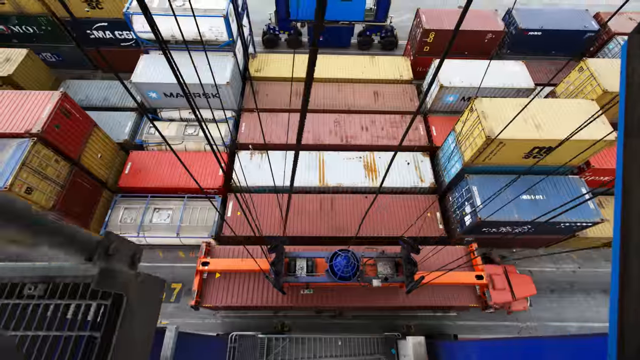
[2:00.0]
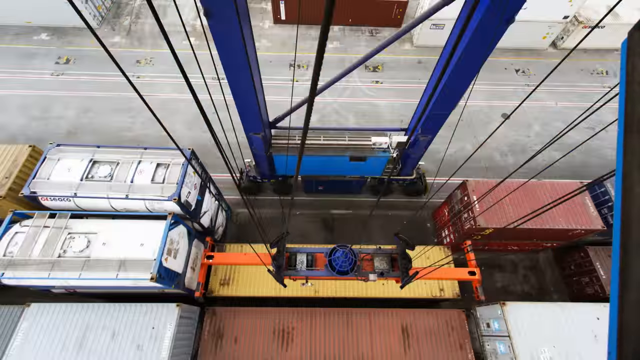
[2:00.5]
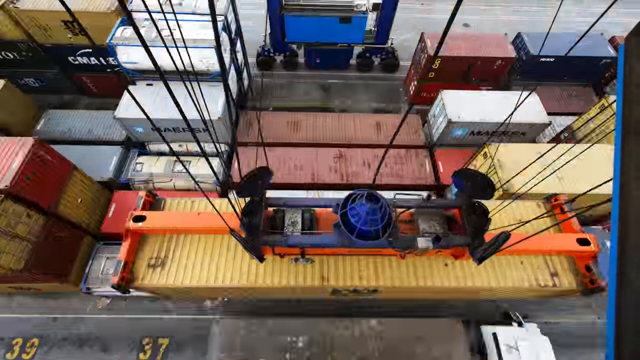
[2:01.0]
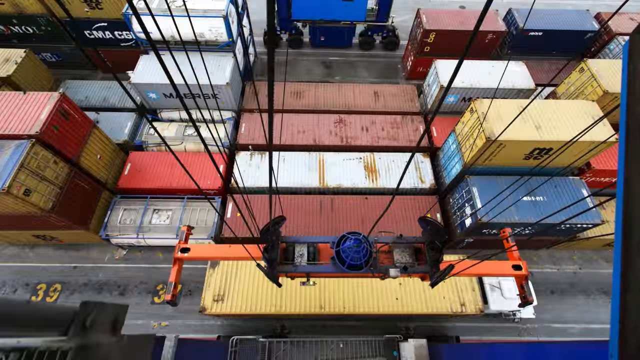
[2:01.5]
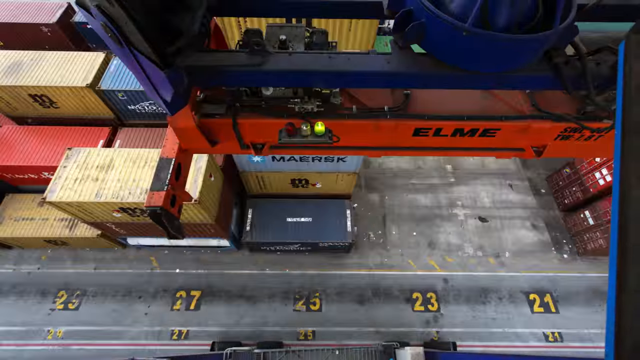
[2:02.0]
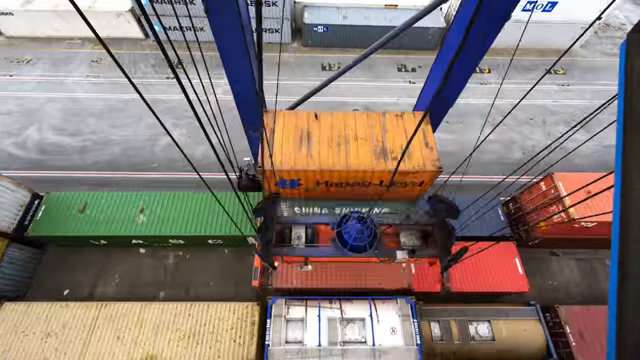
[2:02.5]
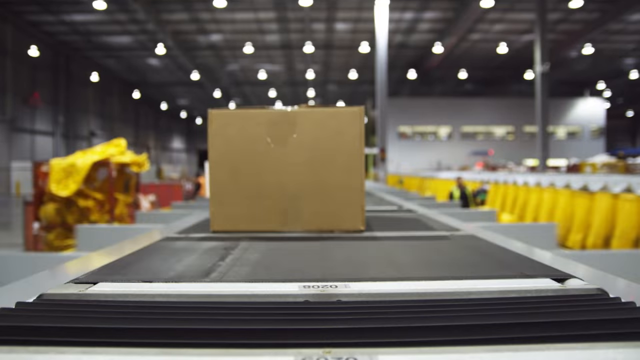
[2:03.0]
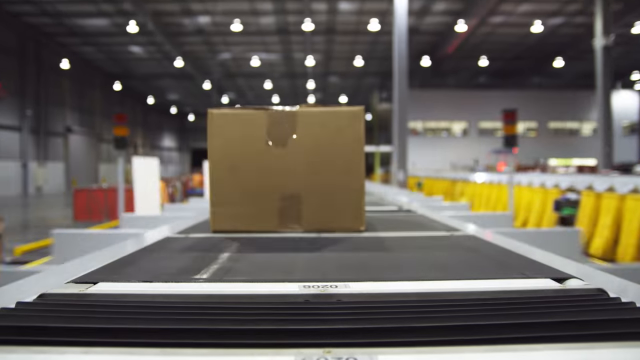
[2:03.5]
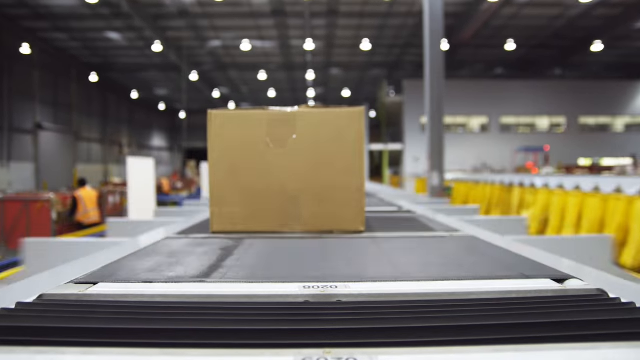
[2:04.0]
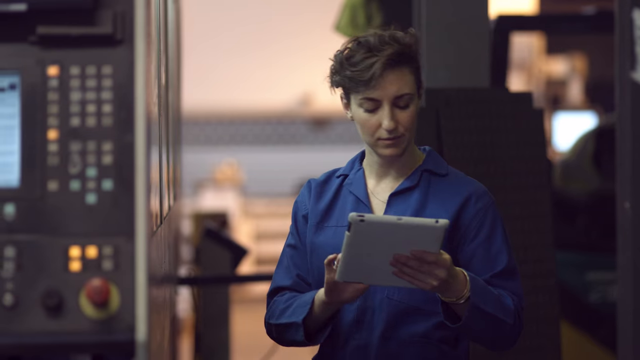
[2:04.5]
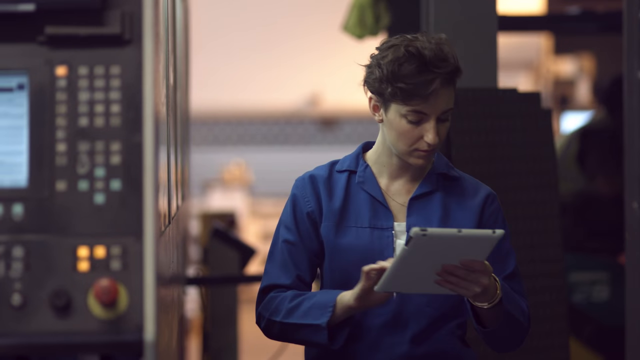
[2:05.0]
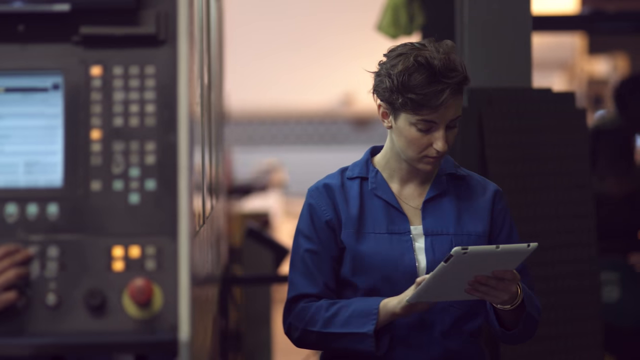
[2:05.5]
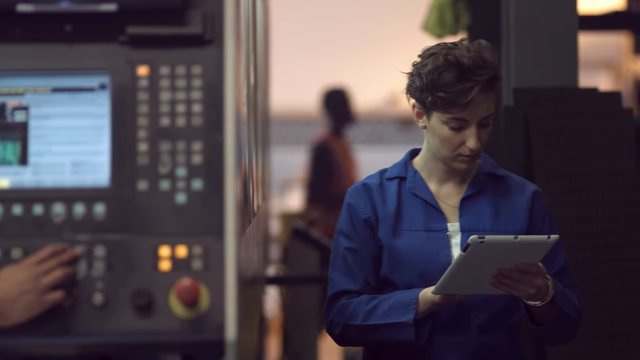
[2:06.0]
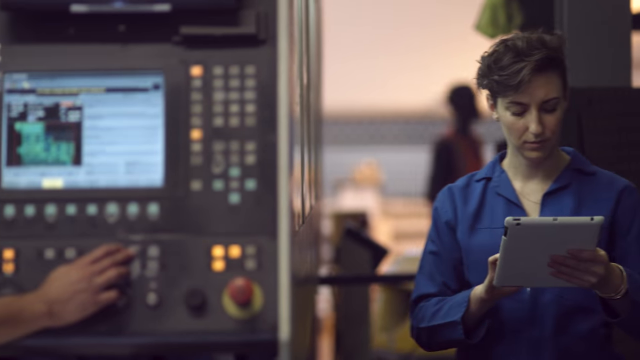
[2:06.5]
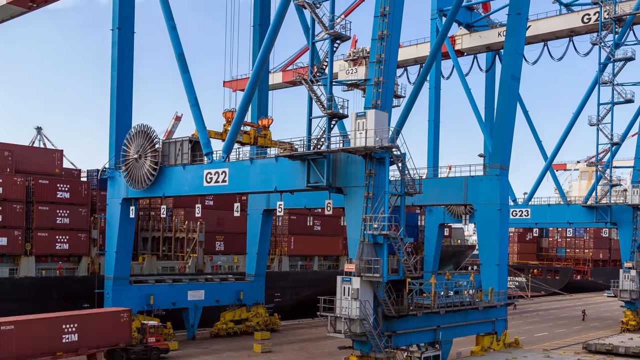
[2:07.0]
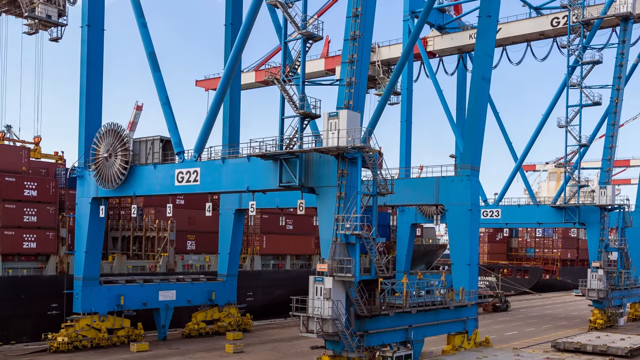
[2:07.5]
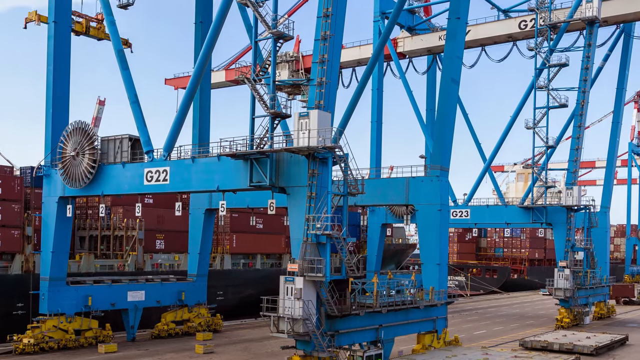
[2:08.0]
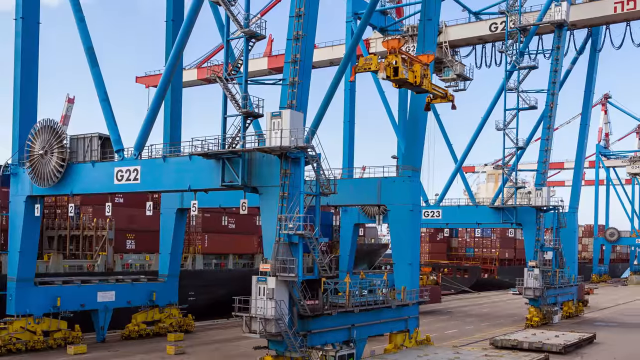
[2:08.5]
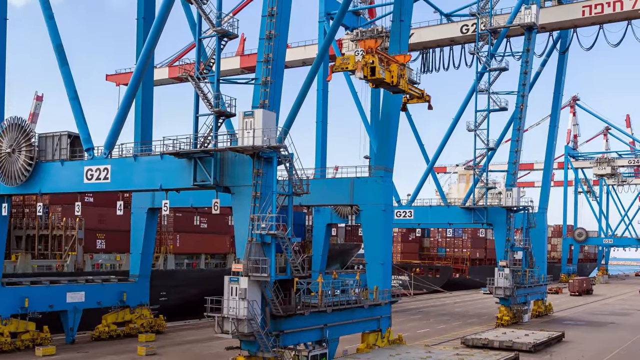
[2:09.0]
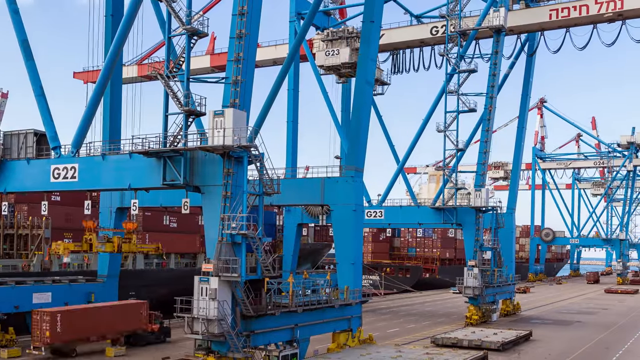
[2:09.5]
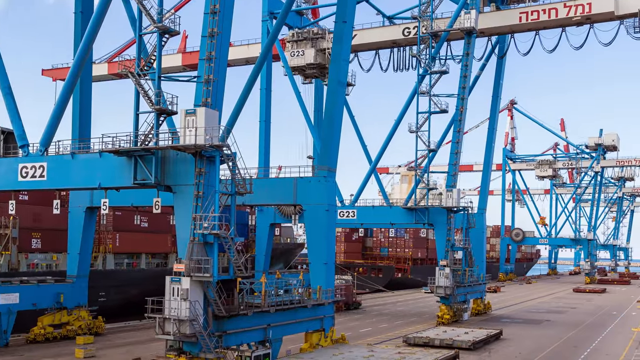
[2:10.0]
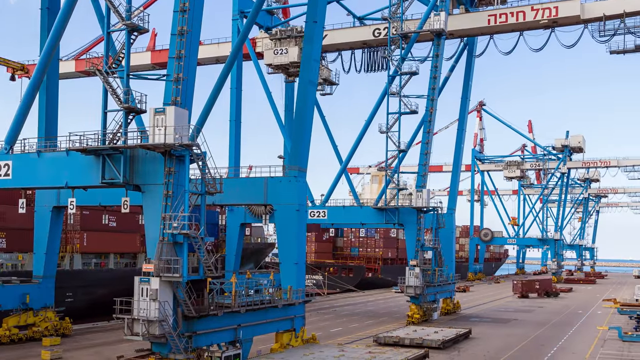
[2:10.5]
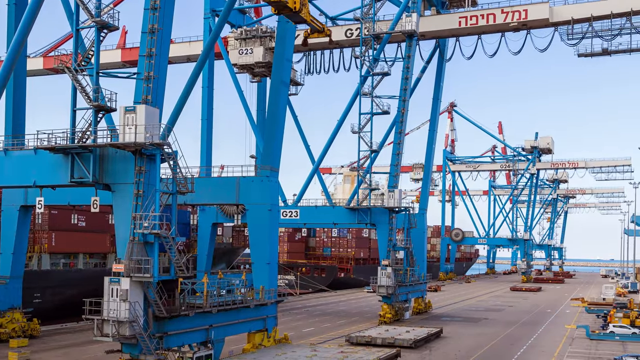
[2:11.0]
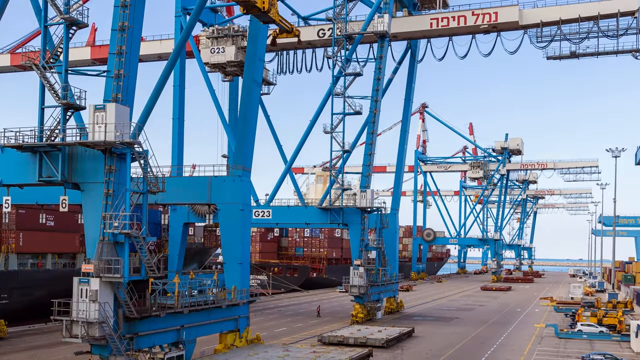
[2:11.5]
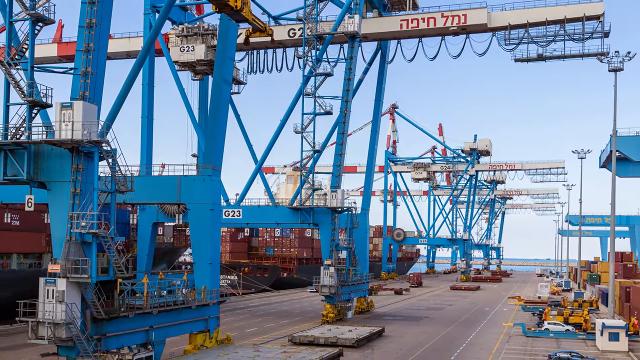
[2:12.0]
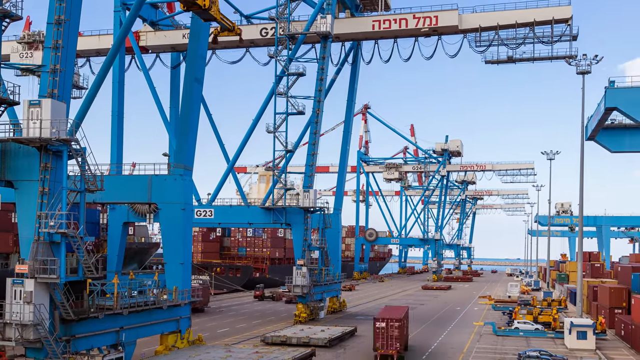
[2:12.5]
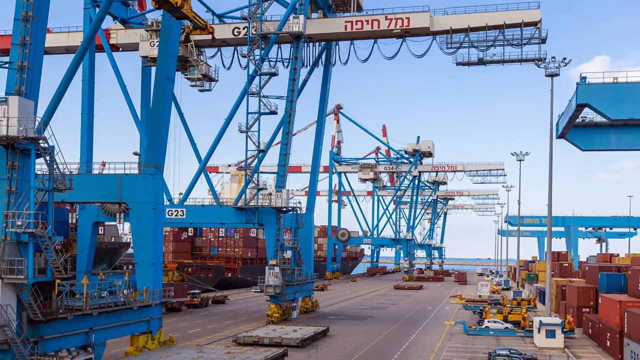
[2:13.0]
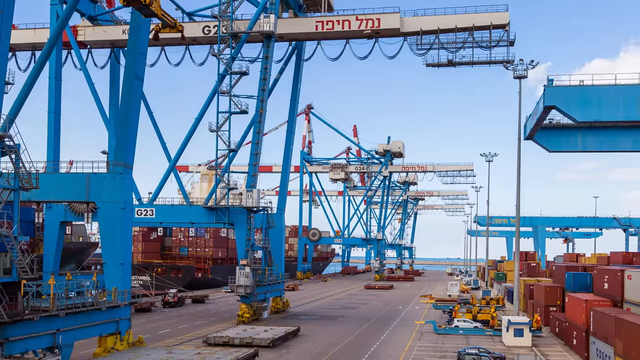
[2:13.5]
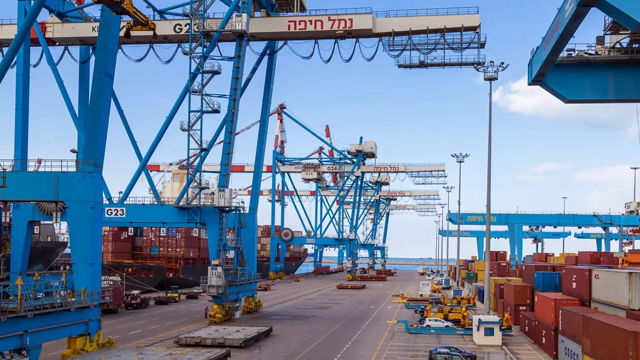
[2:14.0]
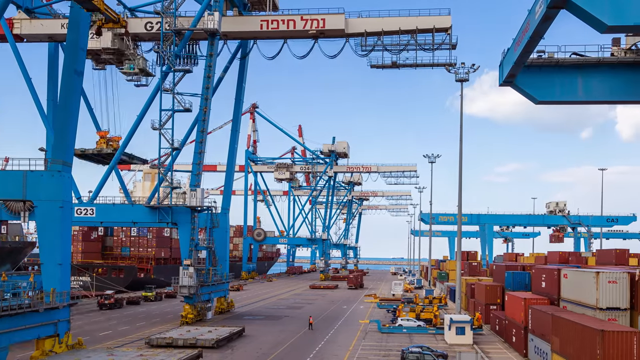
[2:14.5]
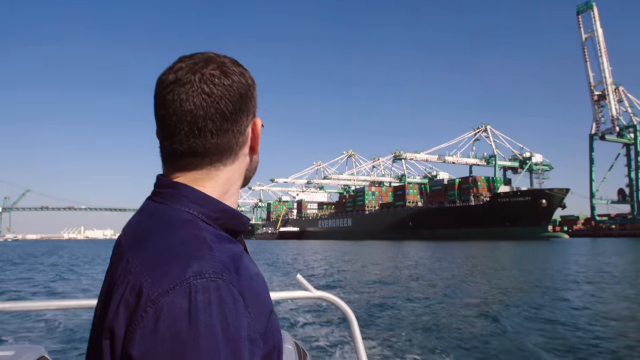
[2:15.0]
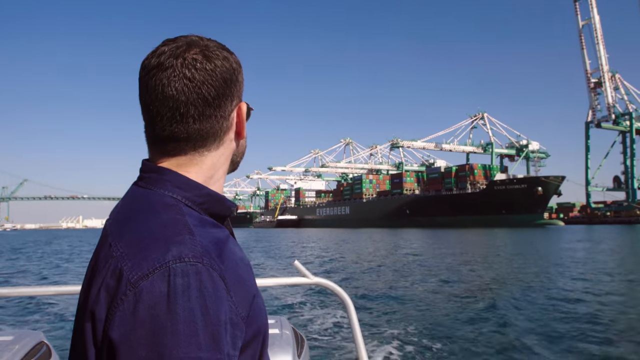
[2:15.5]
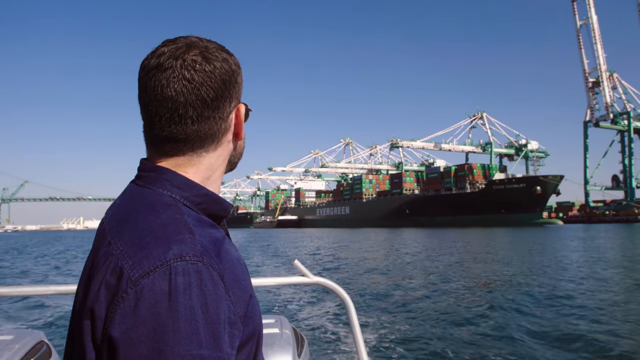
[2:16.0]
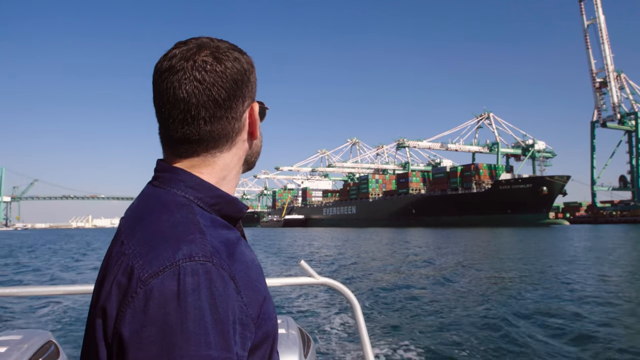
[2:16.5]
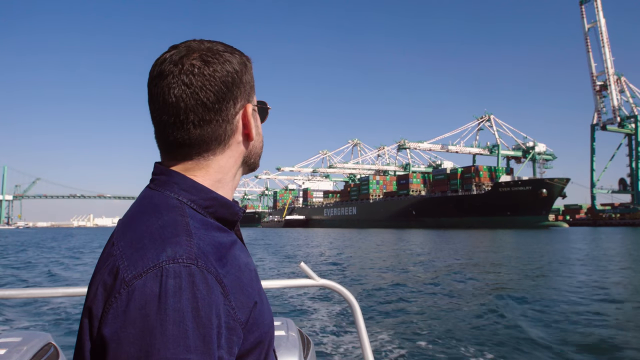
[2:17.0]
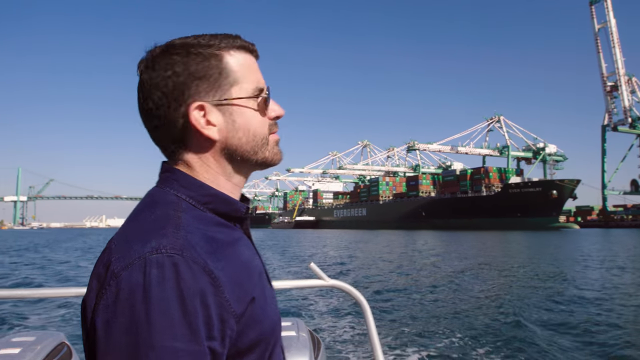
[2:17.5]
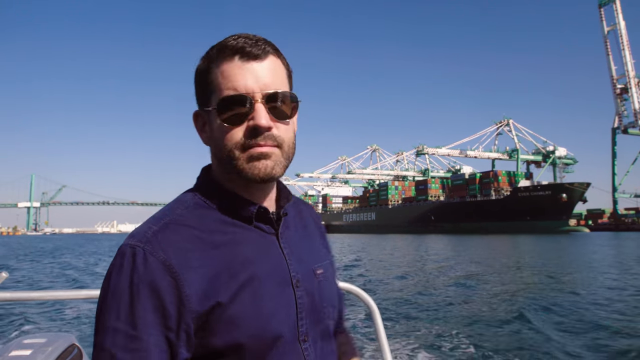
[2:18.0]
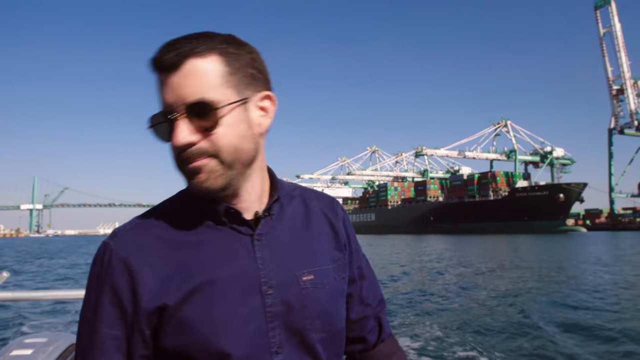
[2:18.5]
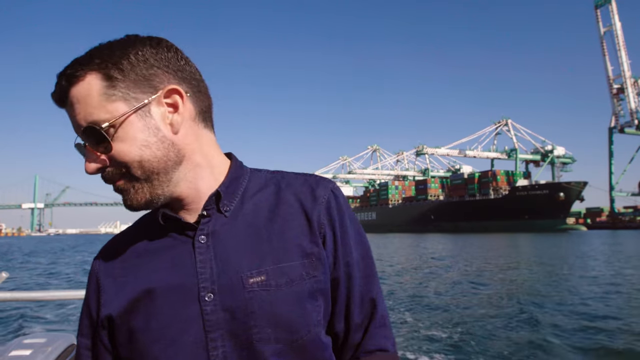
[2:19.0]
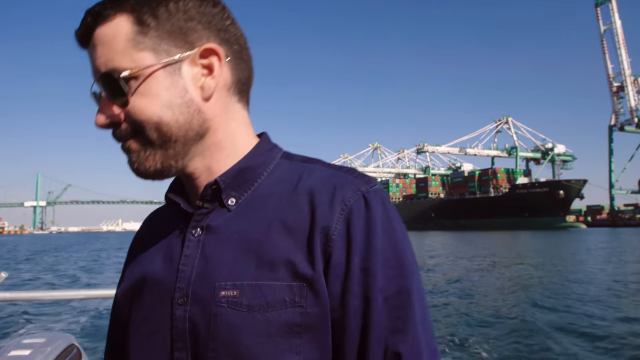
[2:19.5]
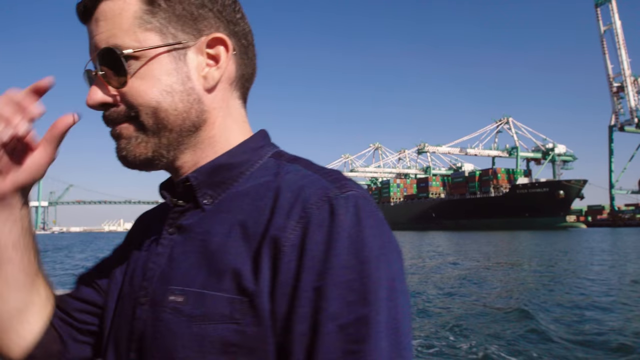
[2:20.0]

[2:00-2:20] Looking down at the containers from the perspective of the crane, giant ropes go down, hook onto a container, pick it up and move it. A box travels on a conveyor belt, with the camera also on the belt, moving along with the box as the warehouse moves alongside. A woman with short cropped hair wears a blue button-up shirt over a white blouse and holds what looks like a white iPad. She appears to be in a control room of sorts, with a video and many illuminated buttons in the background. Another man stands in the background, and off to the woman's left a hand on the console pushes some of the buttons. Cranes are seen again lifting containers and moving them around.